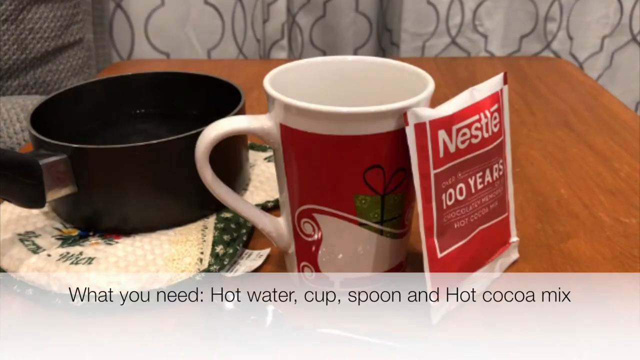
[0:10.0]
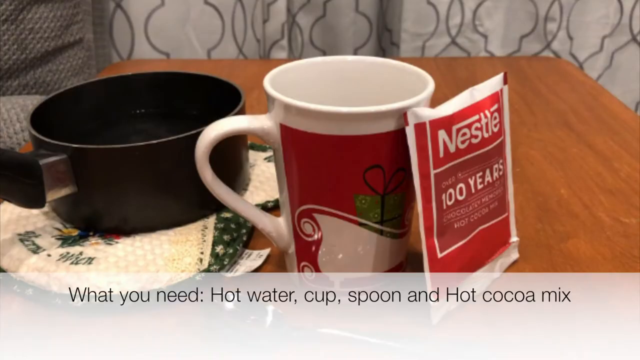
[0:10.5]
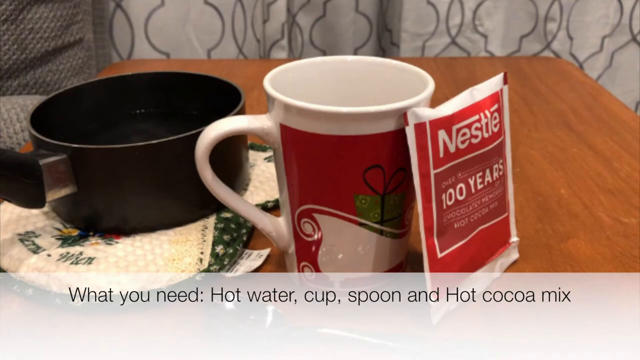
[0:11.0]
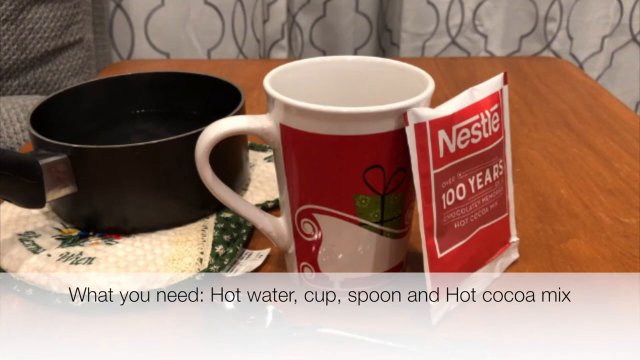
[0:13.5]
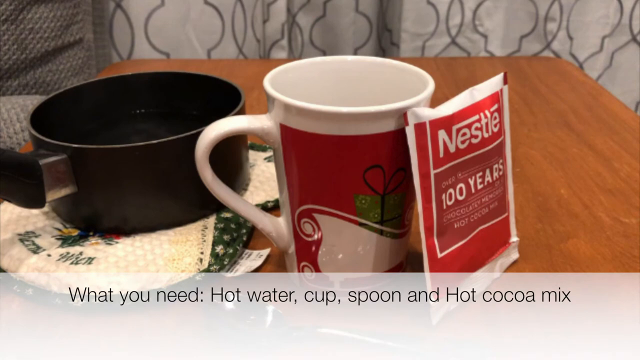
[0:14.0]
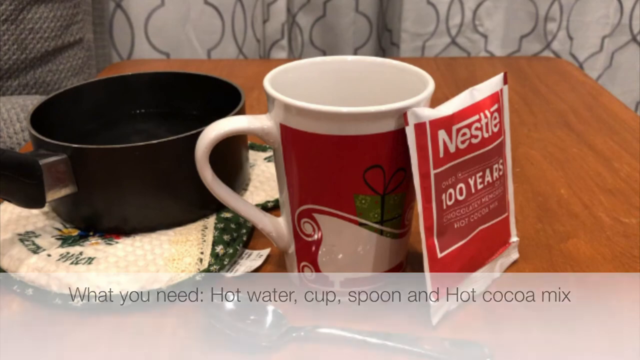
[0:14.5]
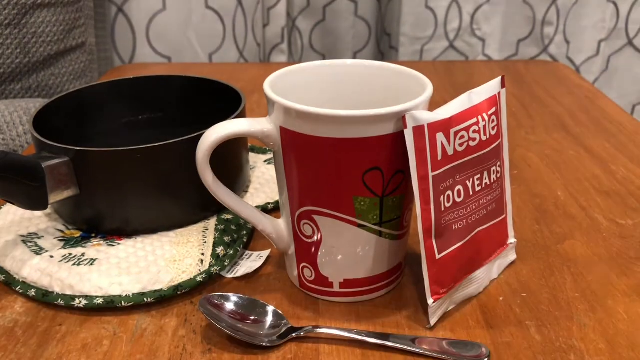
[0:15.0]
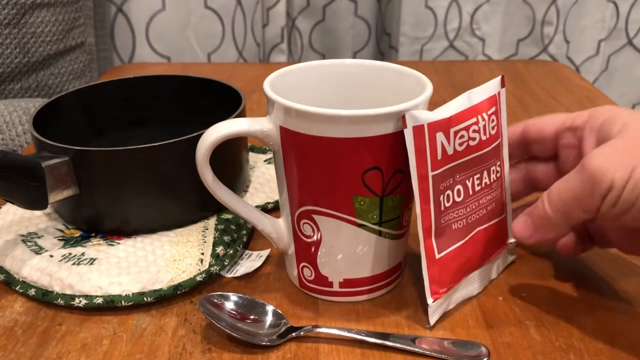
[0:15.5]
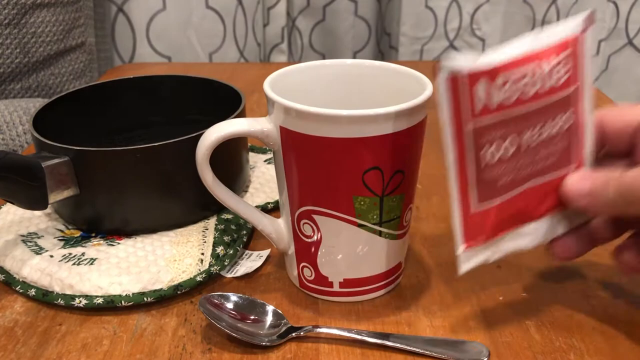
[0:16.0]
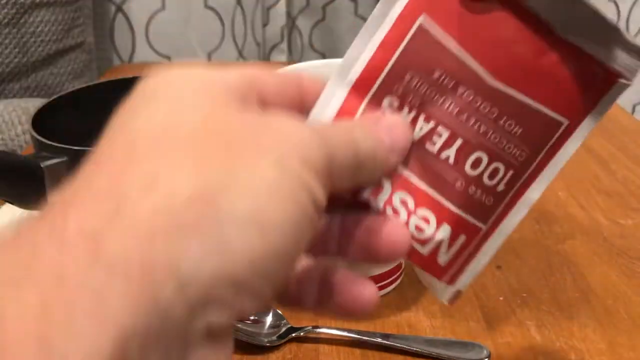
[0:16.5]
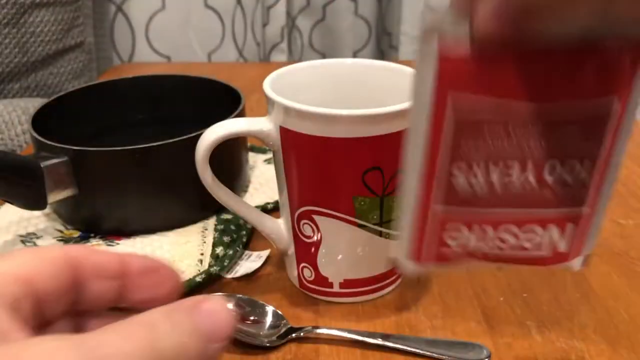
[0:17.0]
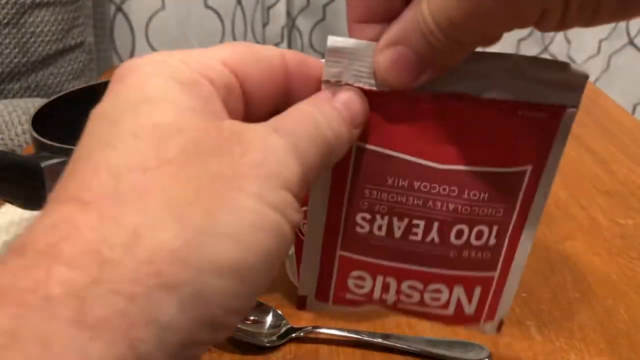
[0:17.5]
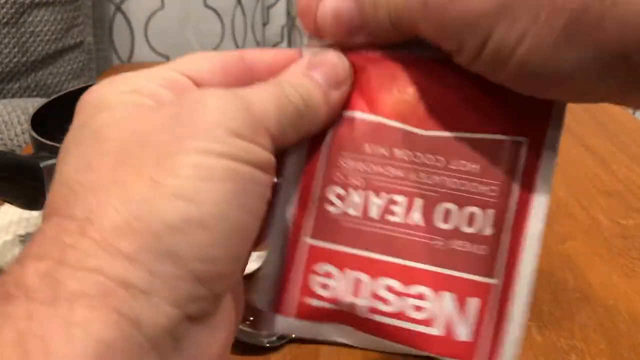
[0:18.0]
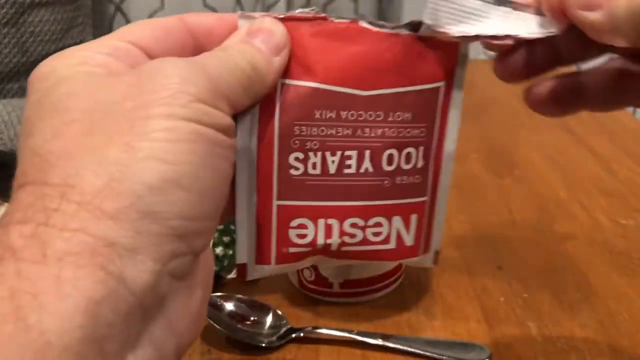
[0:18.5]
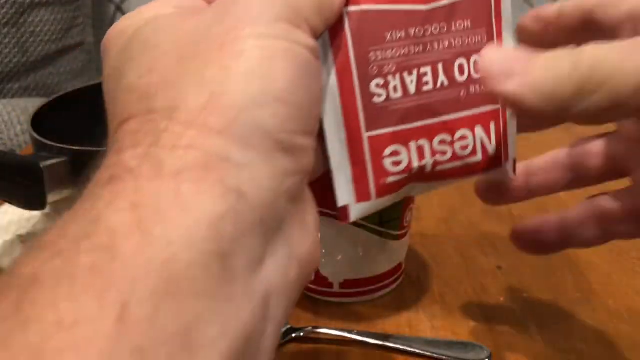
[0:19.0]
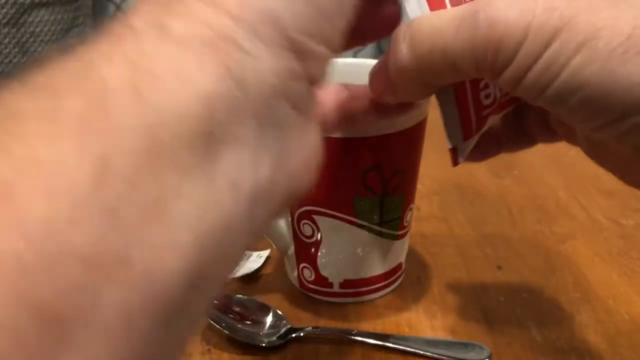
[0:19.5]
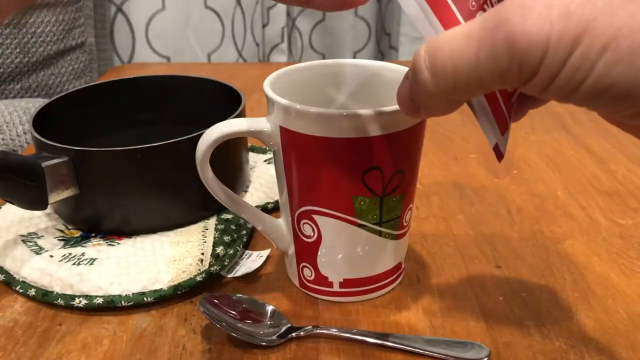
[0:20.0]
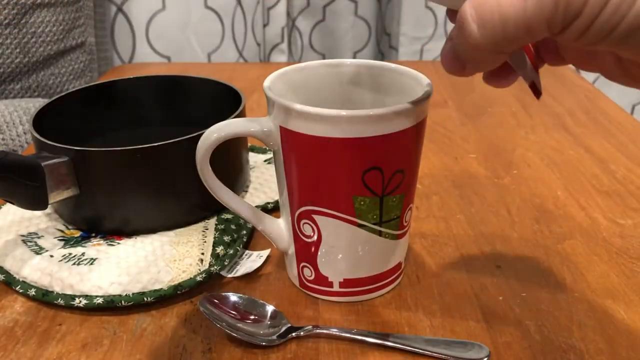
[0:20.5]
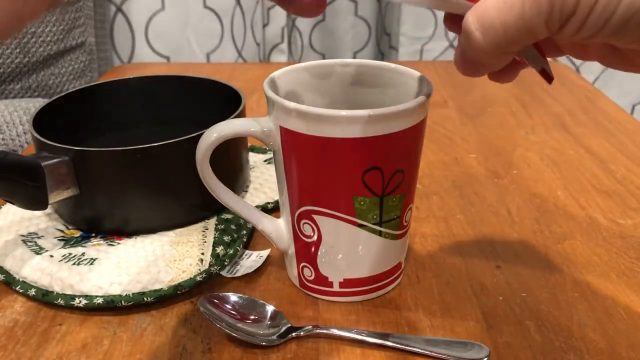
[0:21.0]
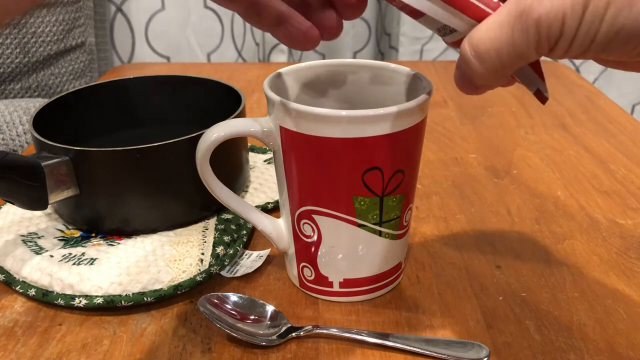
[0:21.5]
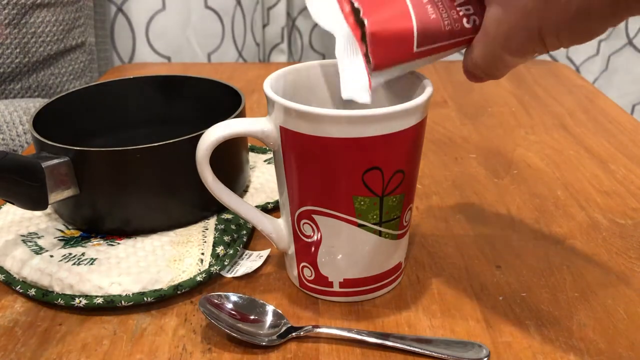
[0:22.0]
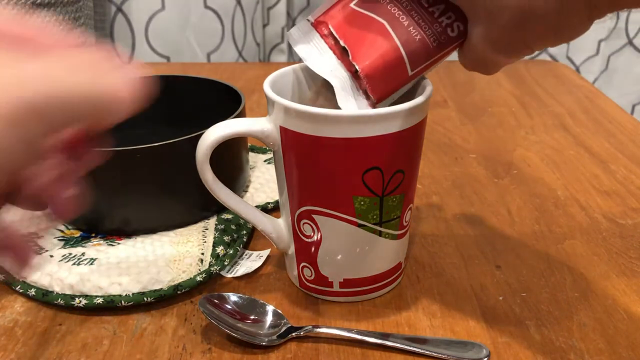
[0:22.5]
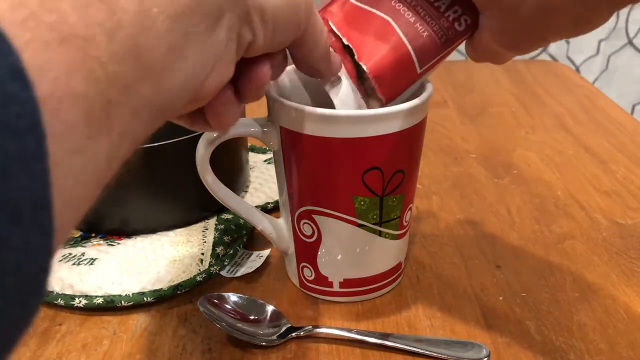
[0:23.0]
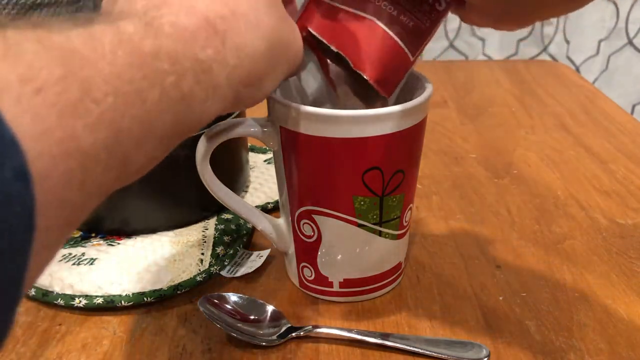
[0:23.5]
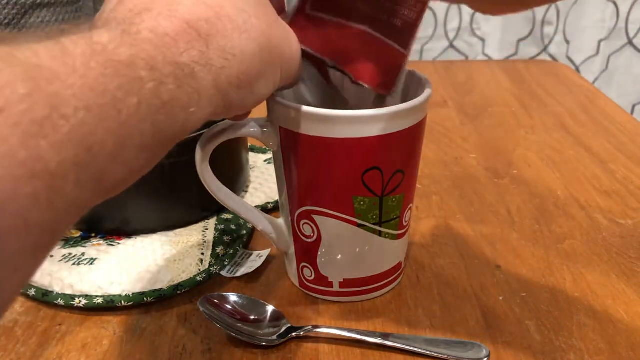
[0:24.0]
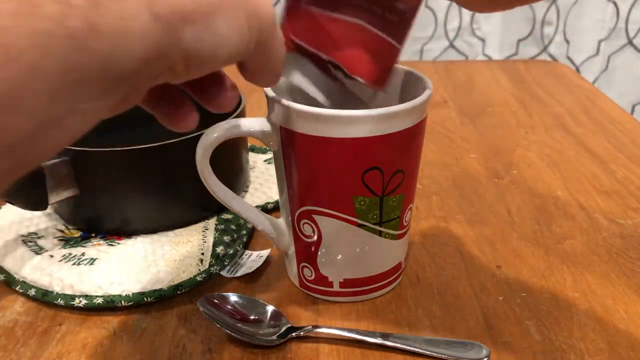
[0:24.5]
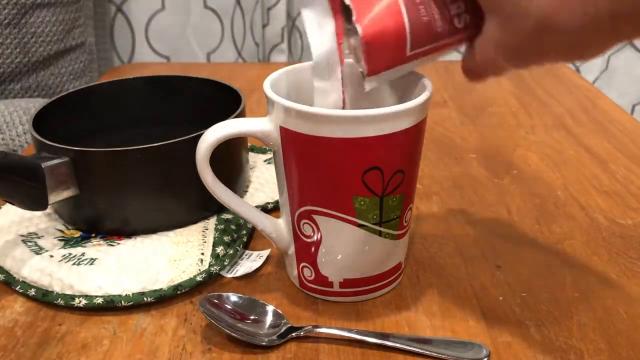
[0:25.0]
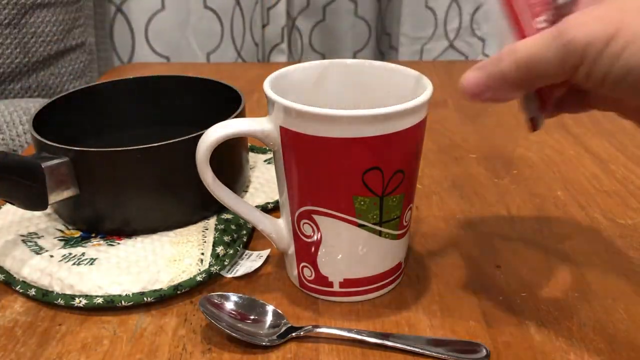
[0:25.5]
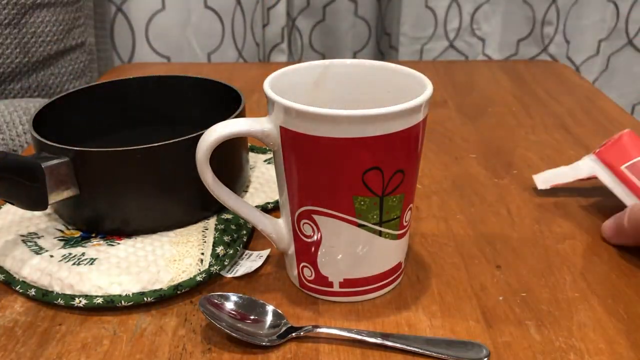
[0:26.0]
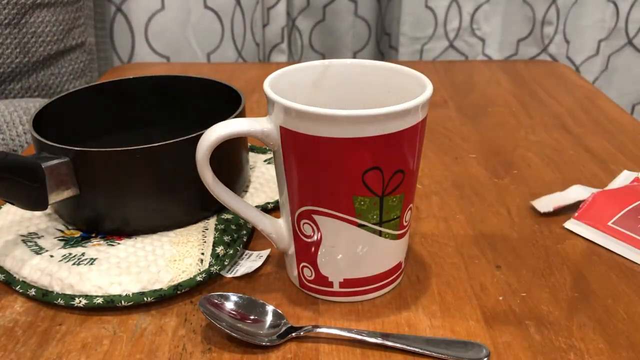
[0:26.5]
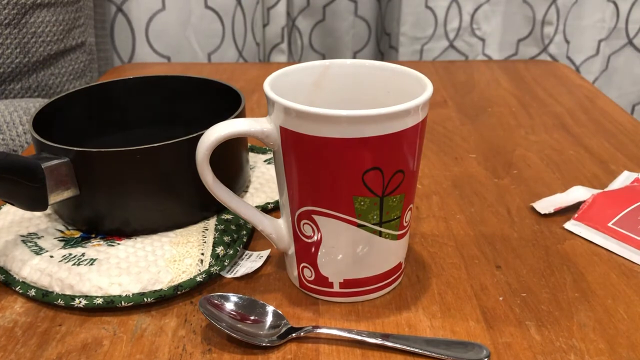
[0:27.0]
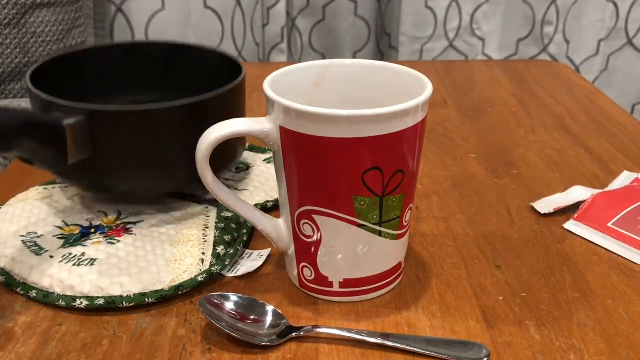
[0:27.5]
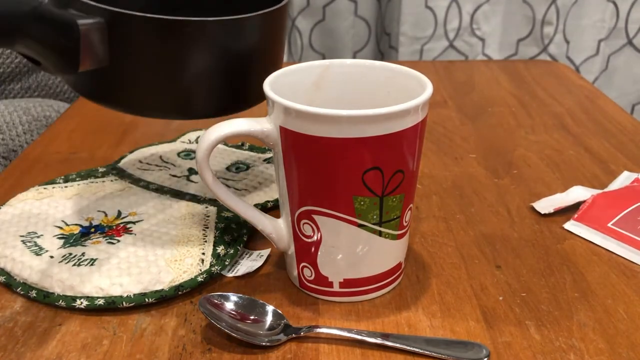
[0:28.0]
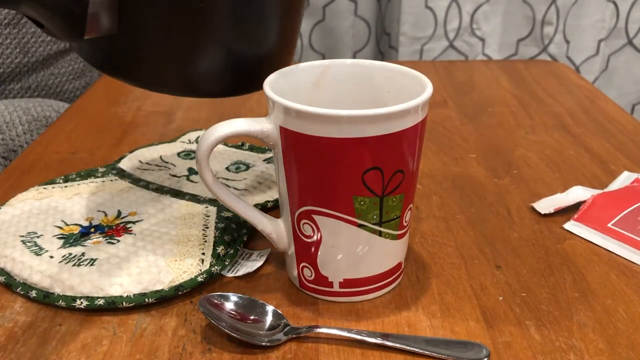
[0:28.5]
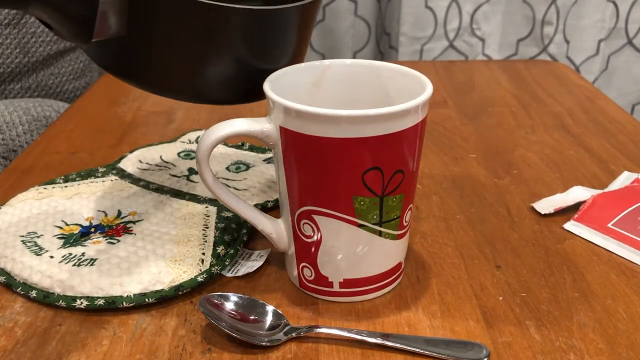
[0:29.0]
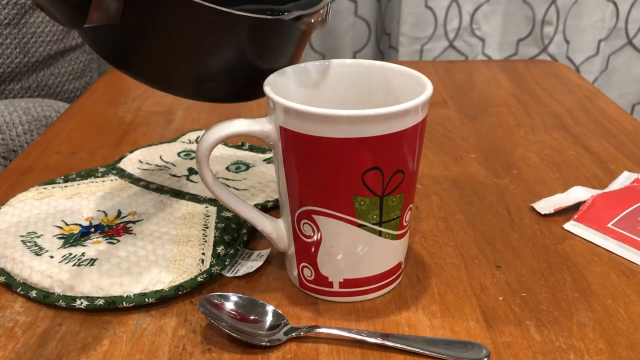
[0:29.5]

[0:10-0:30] A text overlay over the hot chocolate ingredients on the table reads "what you need: hot water, cup, spoon, and hot cocoa mix." A hand comes down, and someone picks up the packet of cocoa in their right hand. They shake it so the contents settle away from the opening, grasp it between the thumb and forefinger of their left hand, and pull the packet open with their right hand. They pour the mix in with their right hand. The torn-off strip is still attached to the packet, so they use their left hand to move it out of the way. They then take the pot in their left hand and very slowly begin pouring the hot water into the hot chocolate mix.